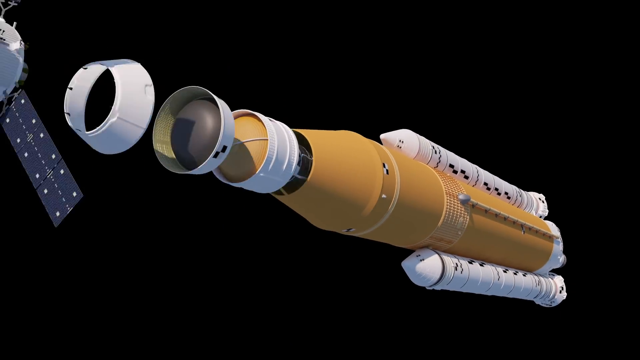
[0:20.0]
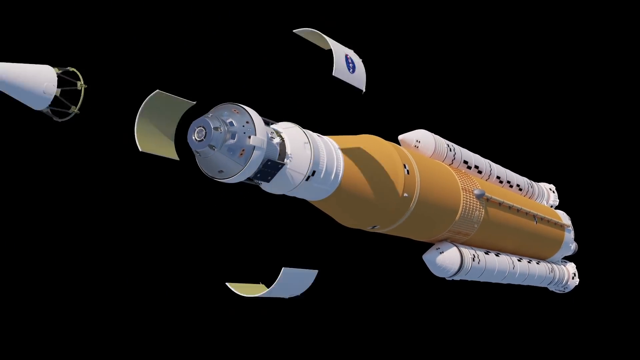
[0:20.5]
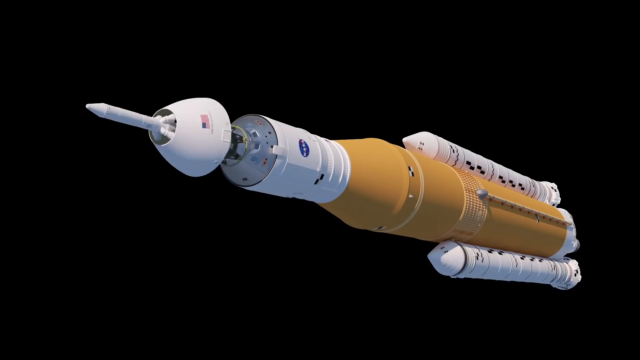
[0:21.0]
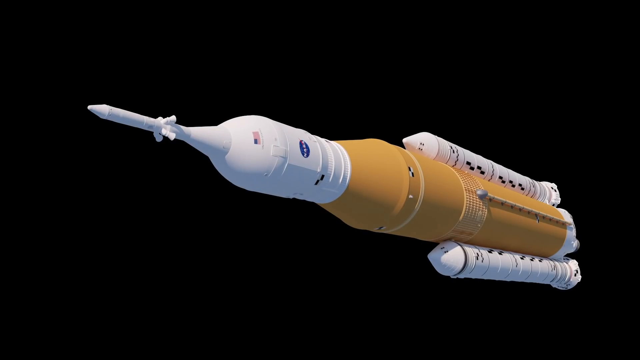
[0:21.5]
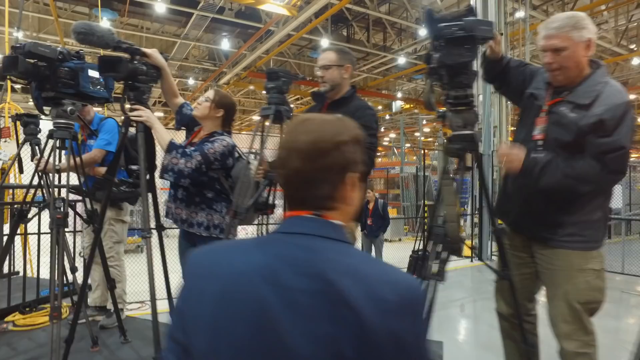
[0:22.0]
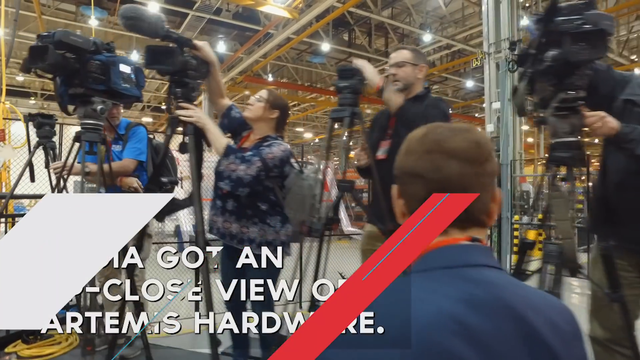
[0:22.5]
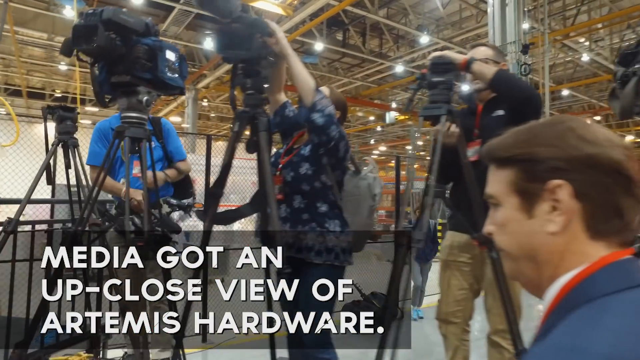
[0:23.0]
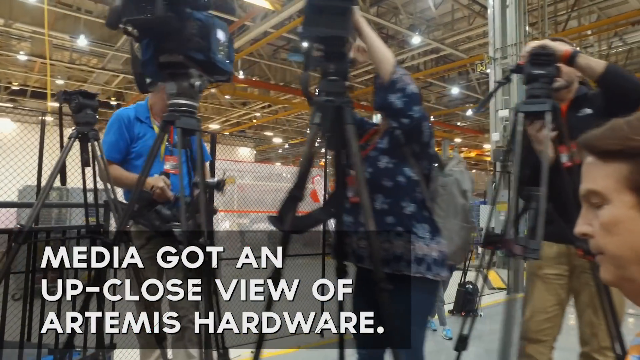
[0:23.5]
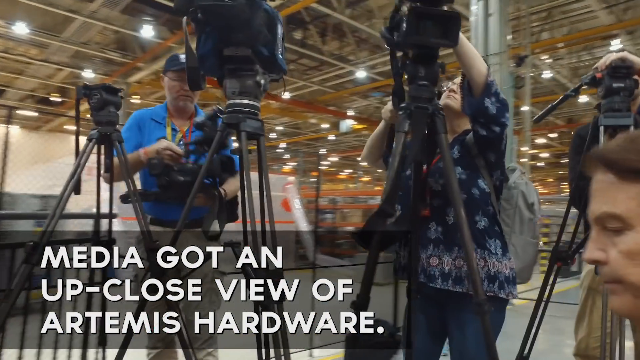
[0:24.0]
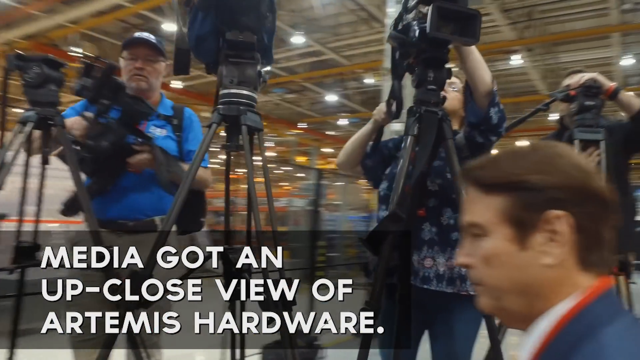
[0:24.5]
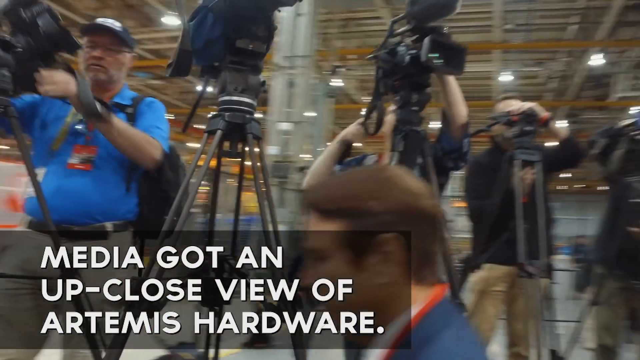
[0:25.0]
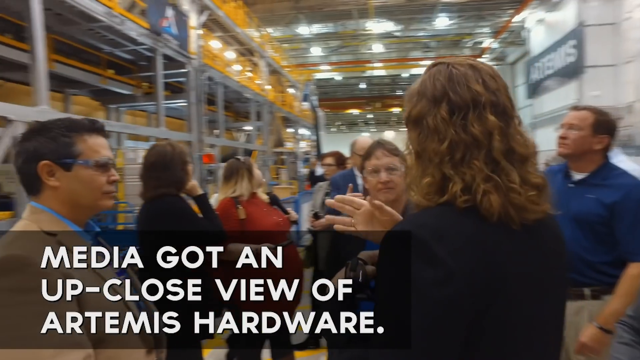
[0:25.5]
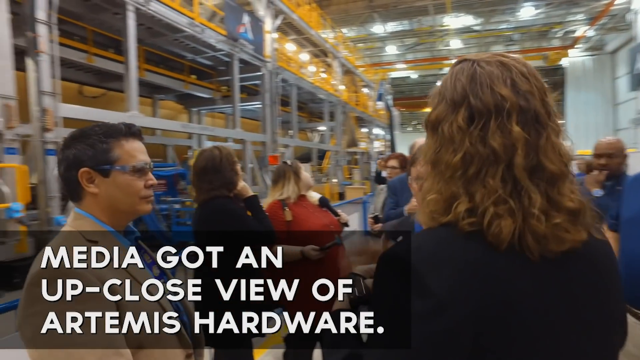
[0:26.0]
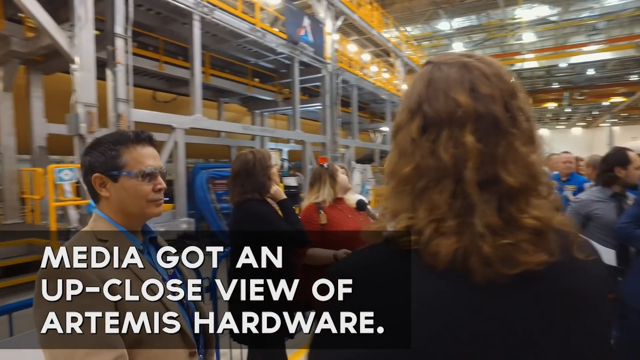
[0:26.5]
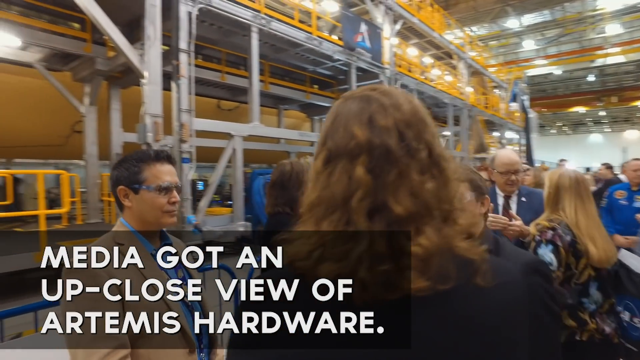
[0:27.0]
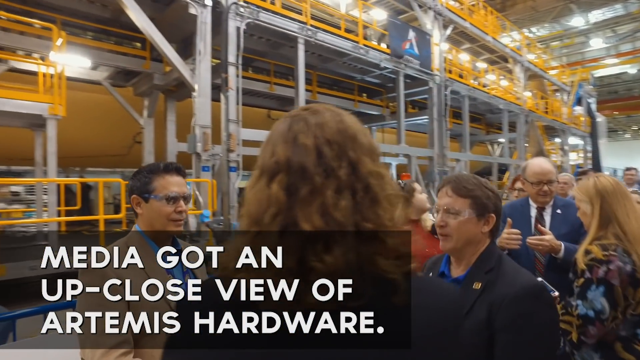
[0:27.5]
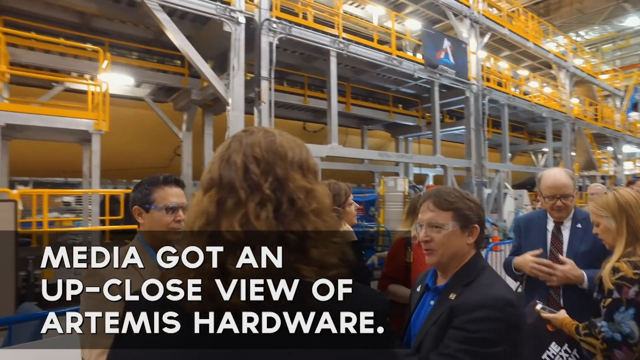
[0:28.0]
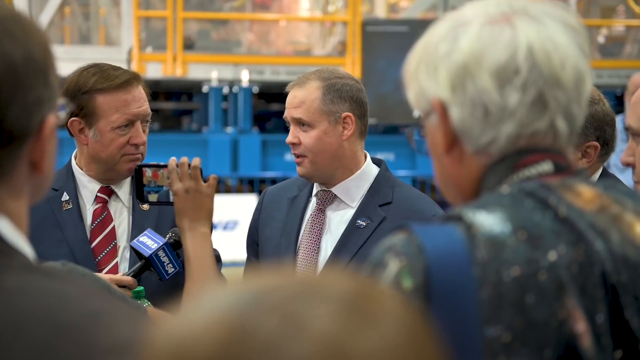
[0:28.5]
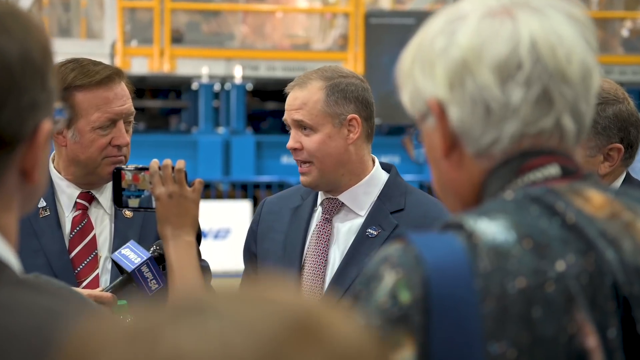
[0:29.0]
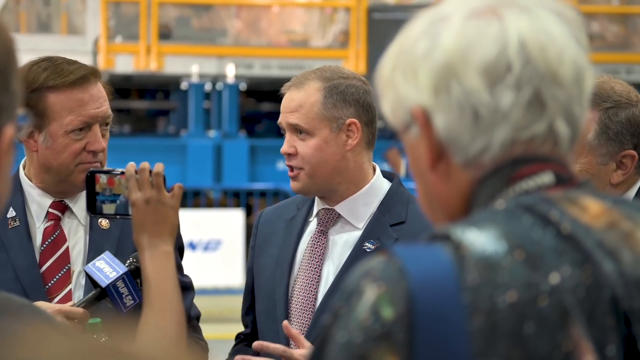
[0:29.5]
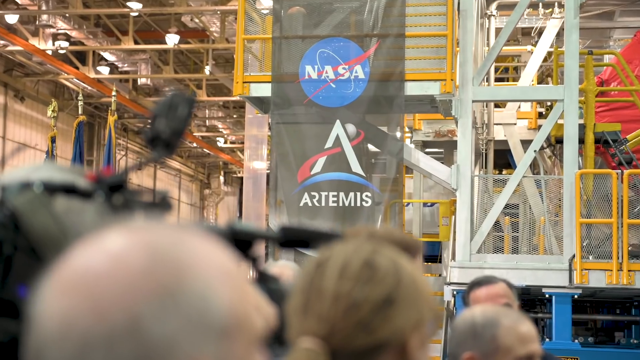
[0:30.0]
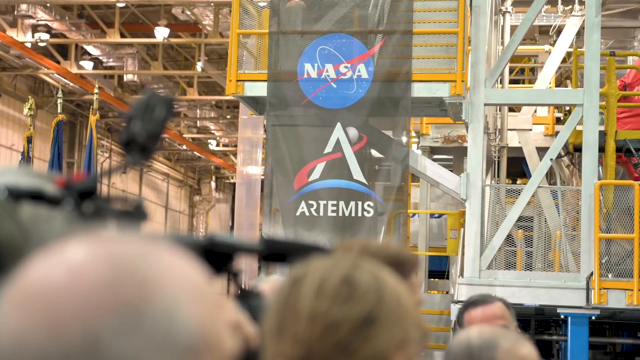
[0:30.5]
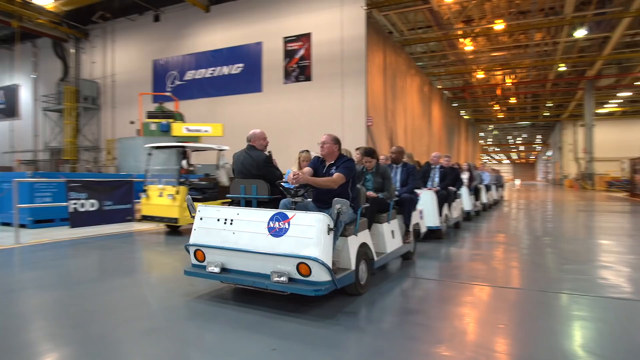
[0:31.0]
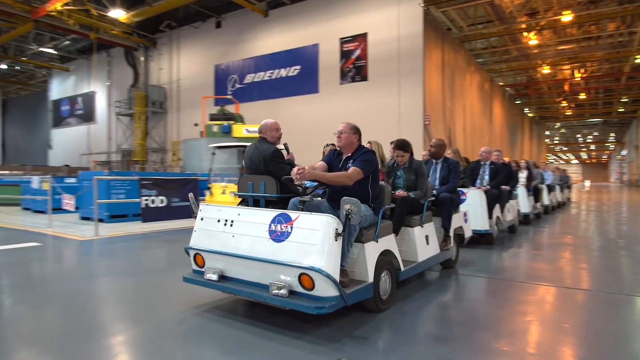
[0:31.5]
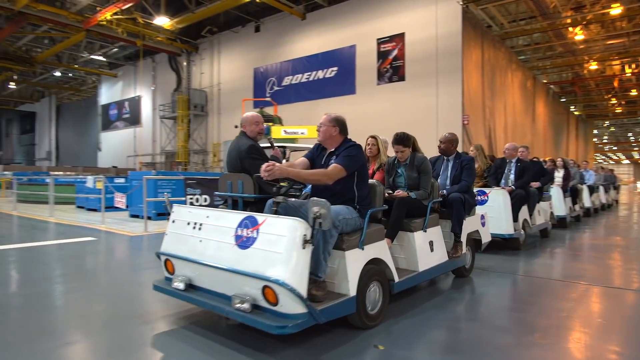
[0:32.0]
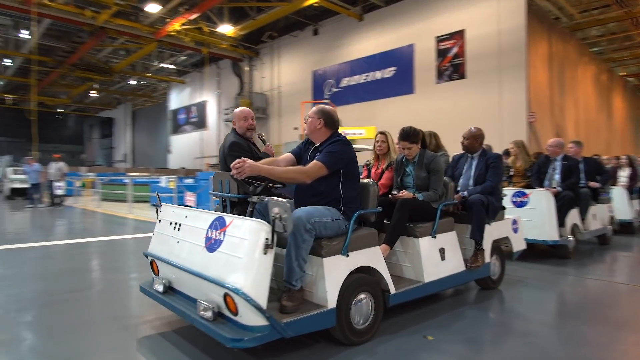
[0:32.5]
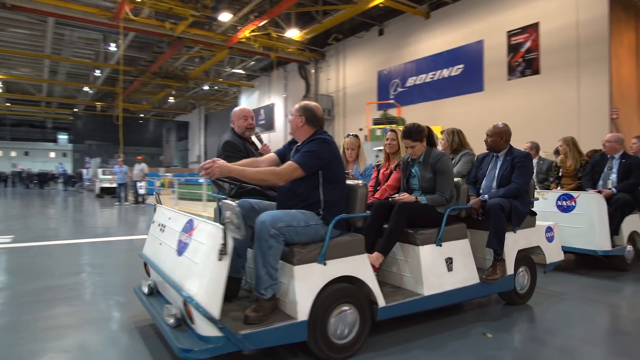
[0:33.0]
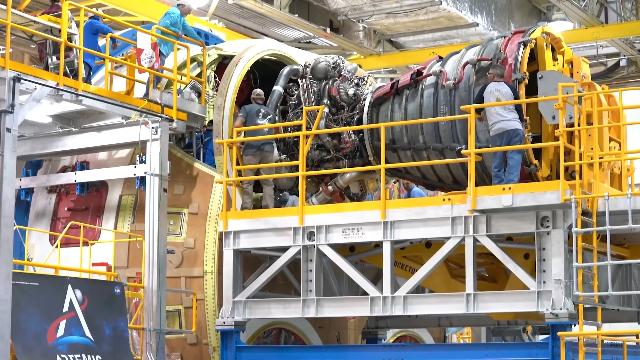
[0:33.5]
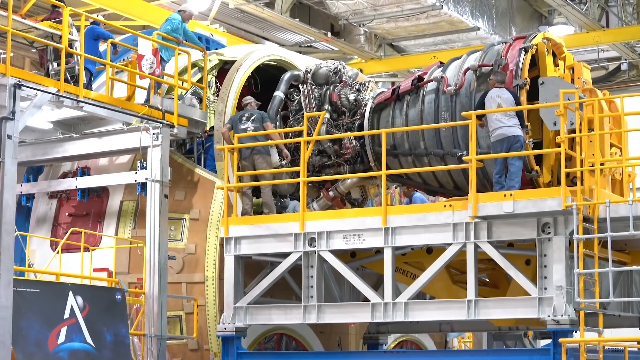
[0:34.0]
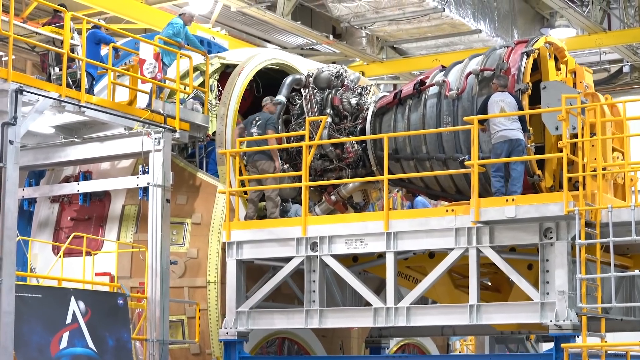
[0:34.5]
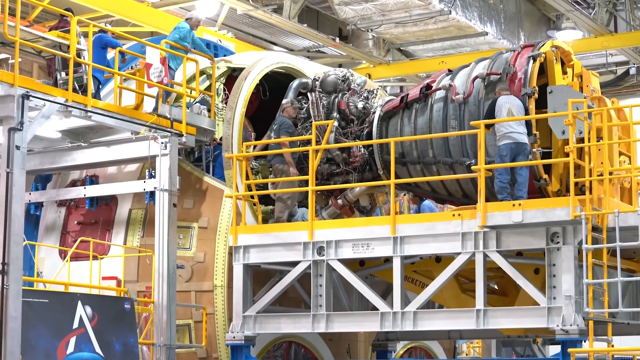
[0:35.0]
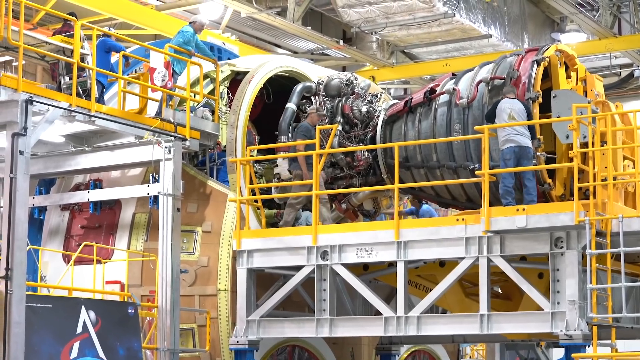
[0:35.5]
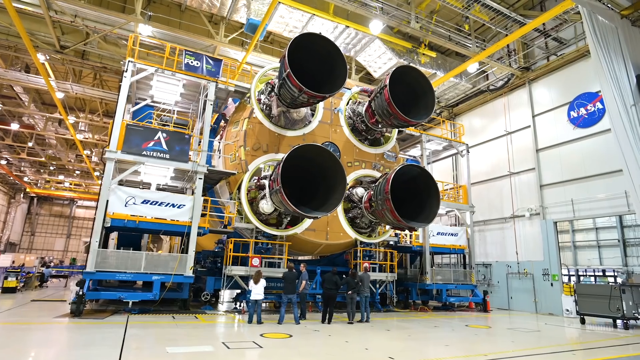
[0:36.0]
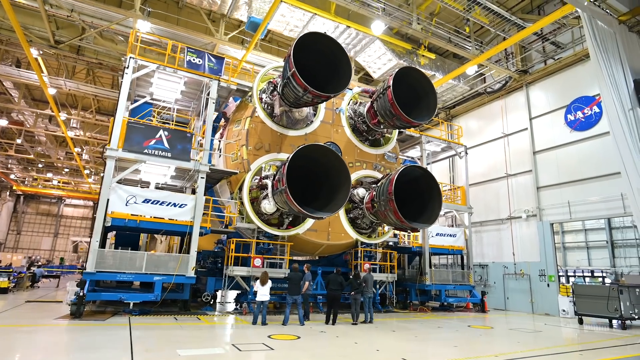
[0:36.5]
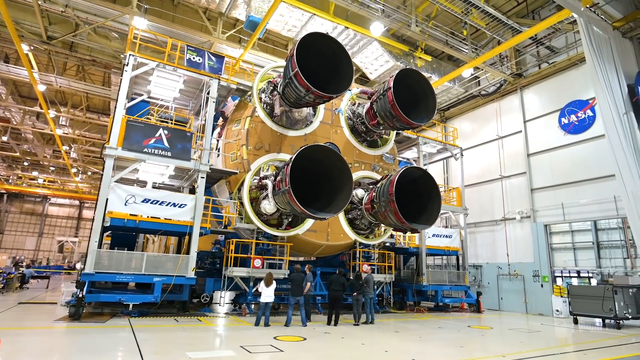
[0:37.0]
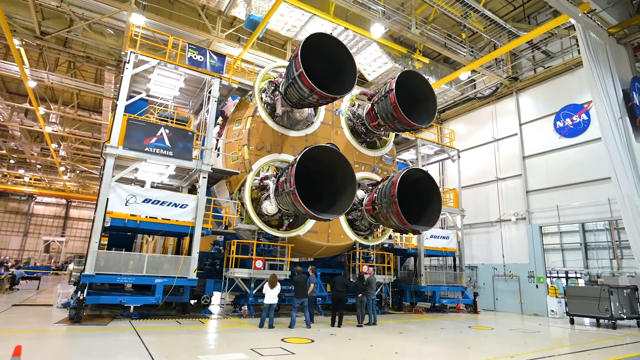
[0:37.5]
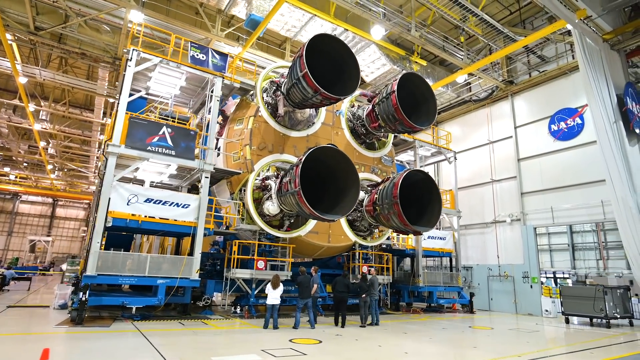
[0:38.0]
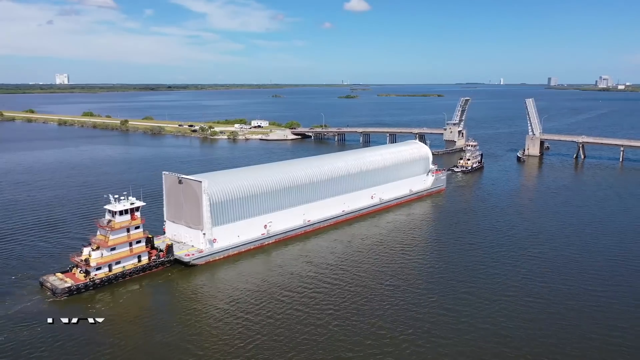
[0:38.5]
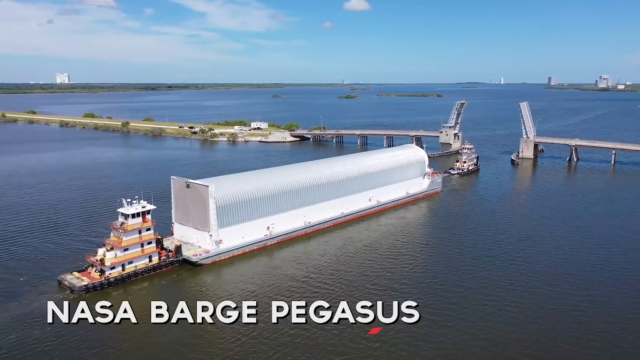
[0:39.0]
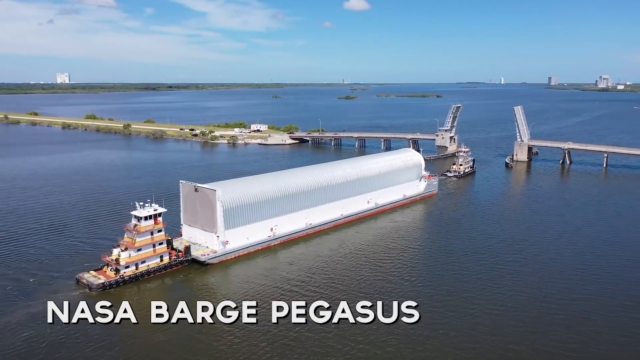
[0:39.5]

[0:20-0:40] A group of news reporters is apparently inside a NASA building, and text says "they got an up and close view of Artemis." A building out in the middle of the ocean is shown. People set up cameras and other equipment inside a building, while other people ride on a ride that carries them to their destination. The NASA barge Pegasus appears to be out in the middle of the ocean. The group seems to be setting up for a news conference about Artemis. There is also what looks like a space shuttle-type object, apparently meant to be put into space.